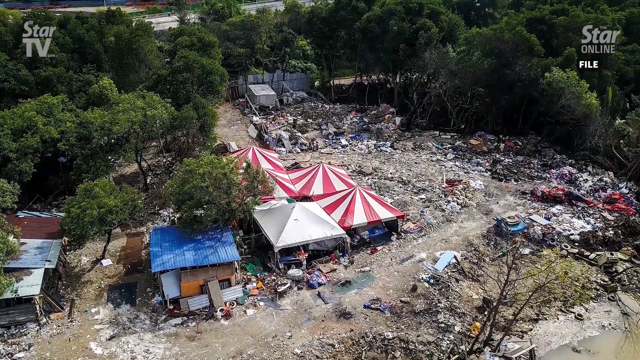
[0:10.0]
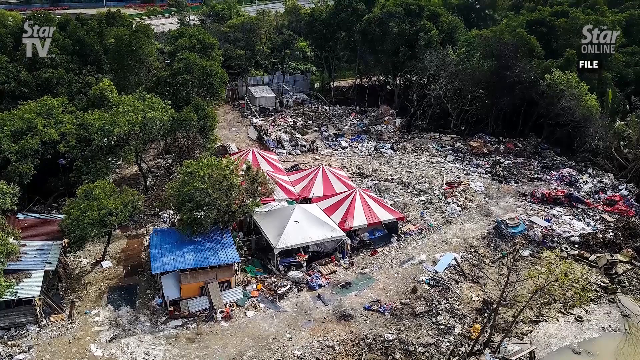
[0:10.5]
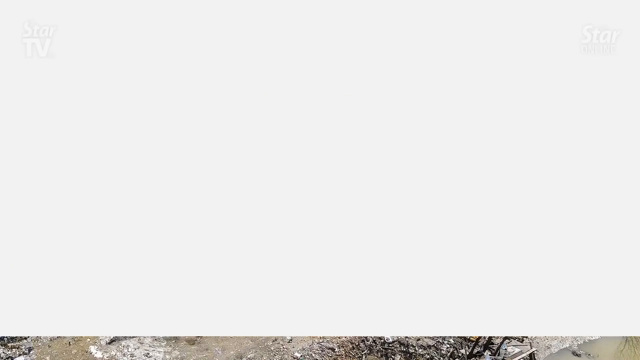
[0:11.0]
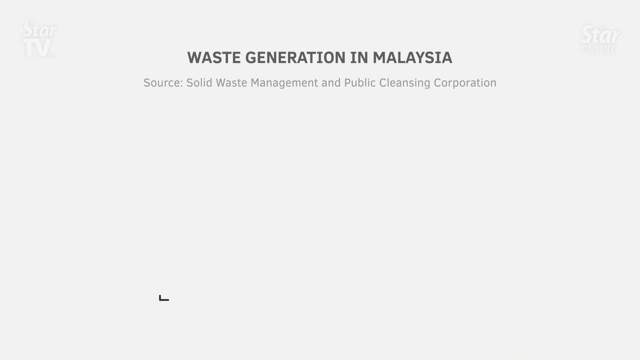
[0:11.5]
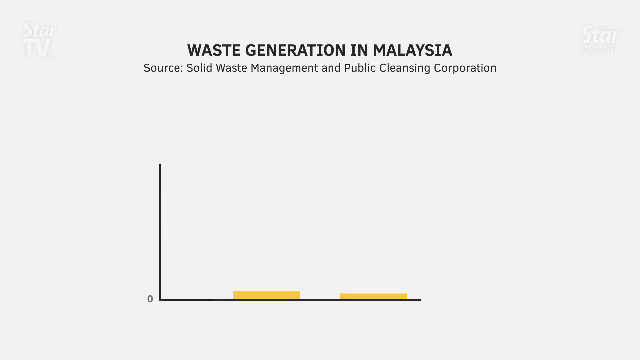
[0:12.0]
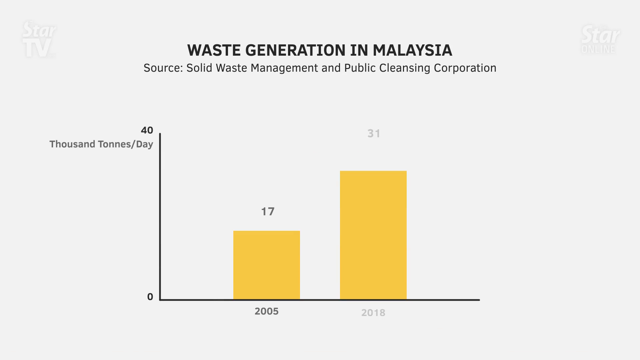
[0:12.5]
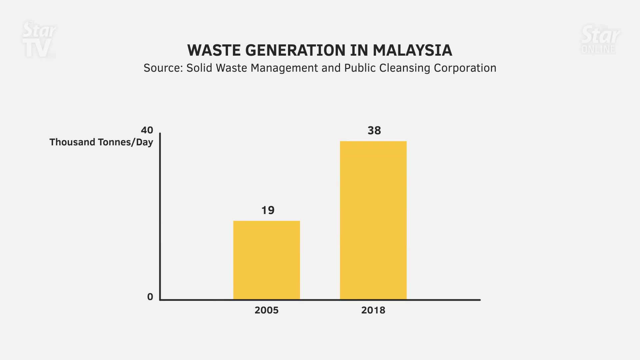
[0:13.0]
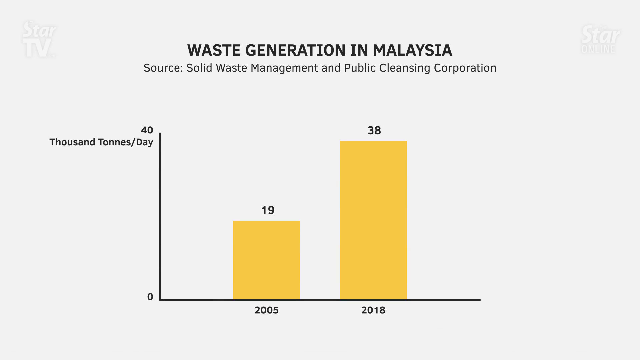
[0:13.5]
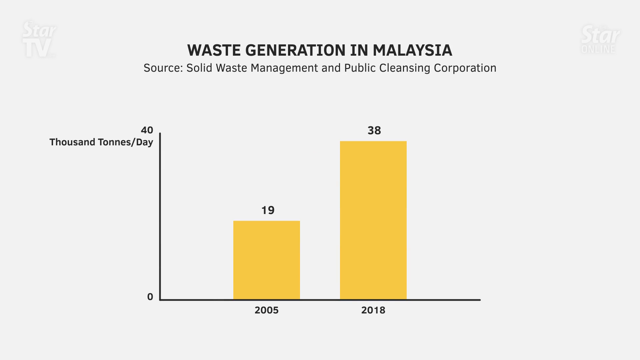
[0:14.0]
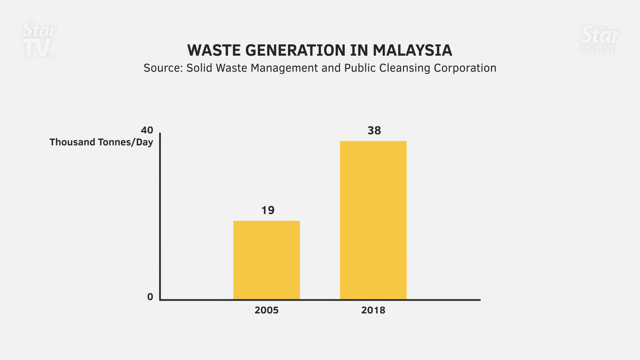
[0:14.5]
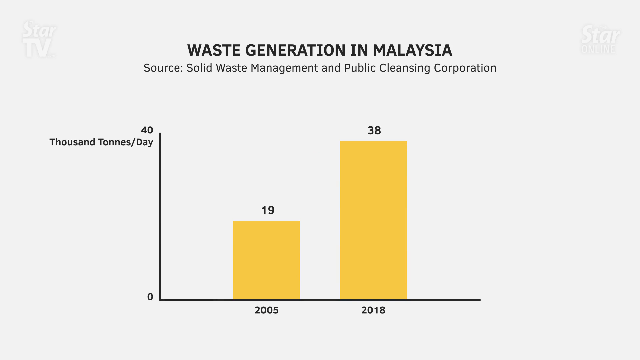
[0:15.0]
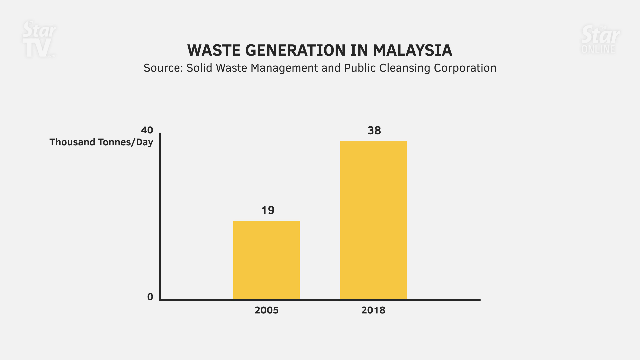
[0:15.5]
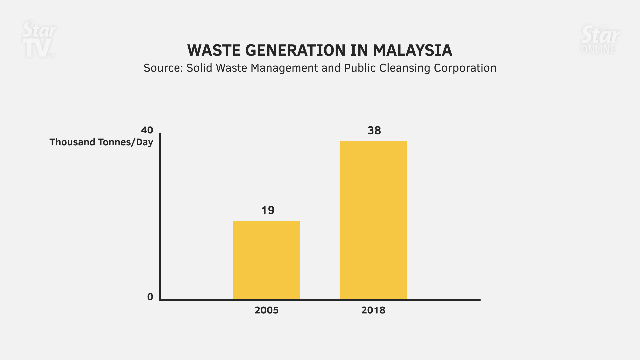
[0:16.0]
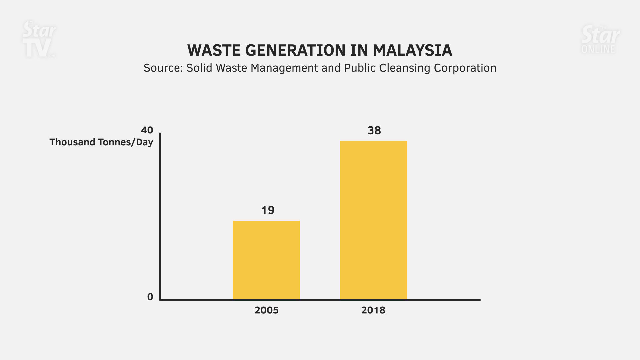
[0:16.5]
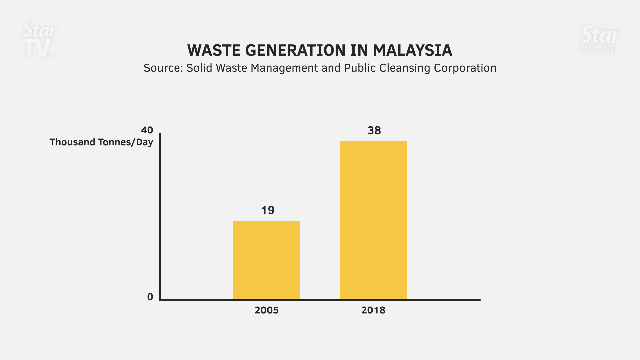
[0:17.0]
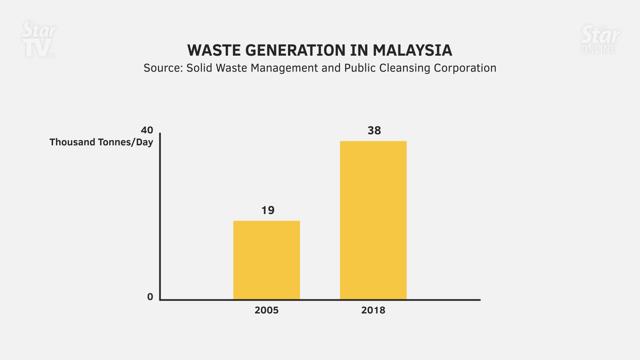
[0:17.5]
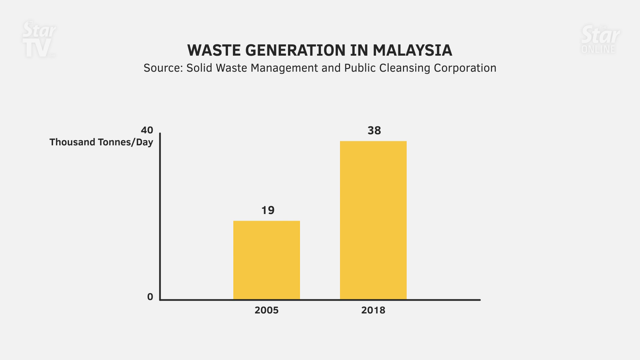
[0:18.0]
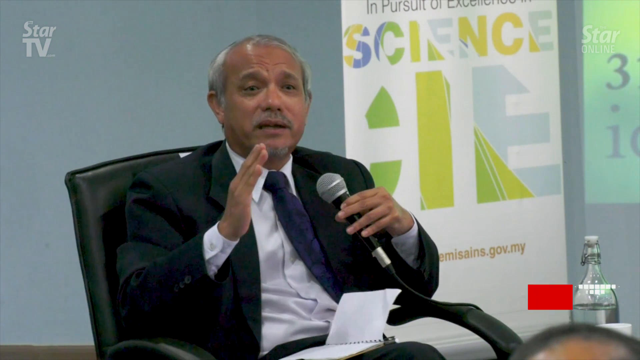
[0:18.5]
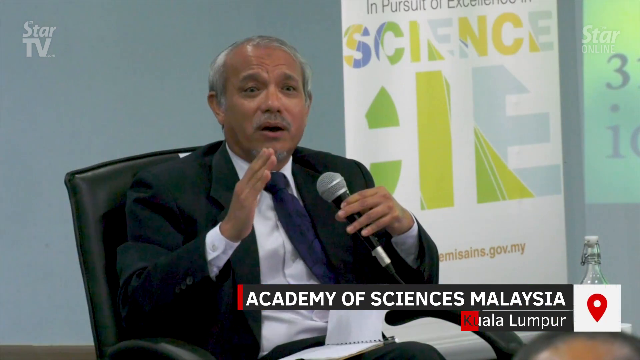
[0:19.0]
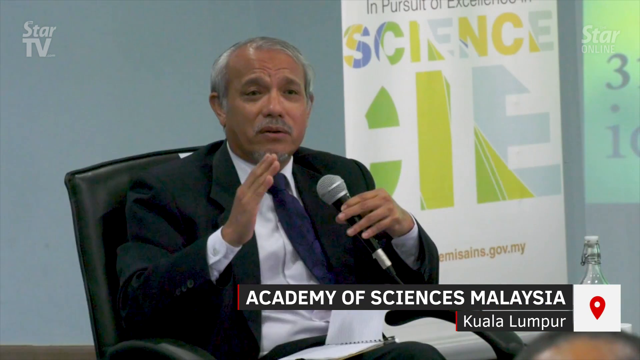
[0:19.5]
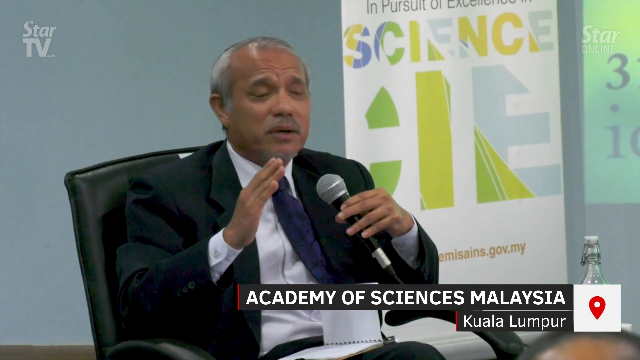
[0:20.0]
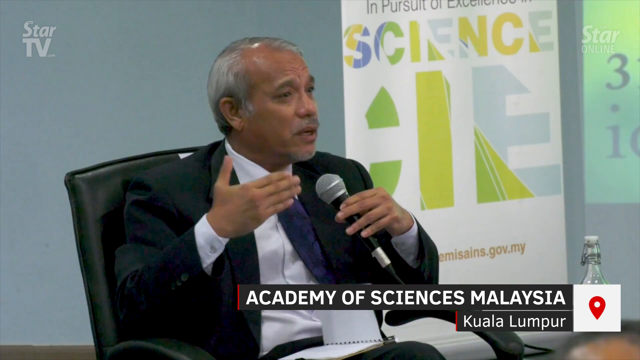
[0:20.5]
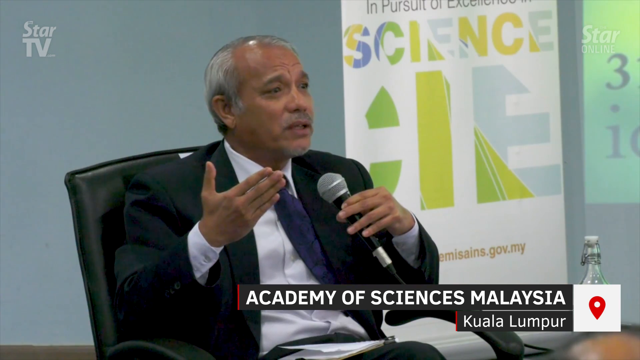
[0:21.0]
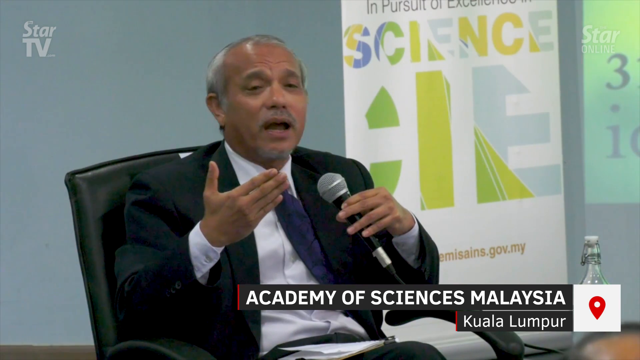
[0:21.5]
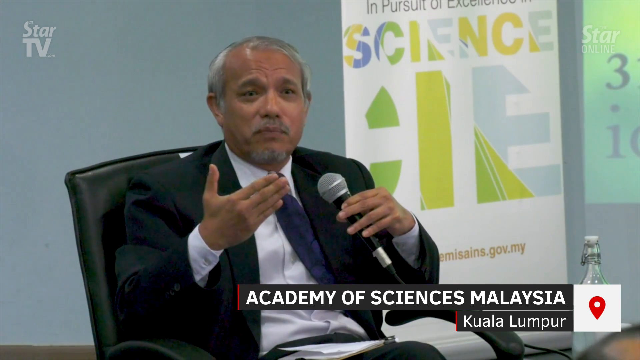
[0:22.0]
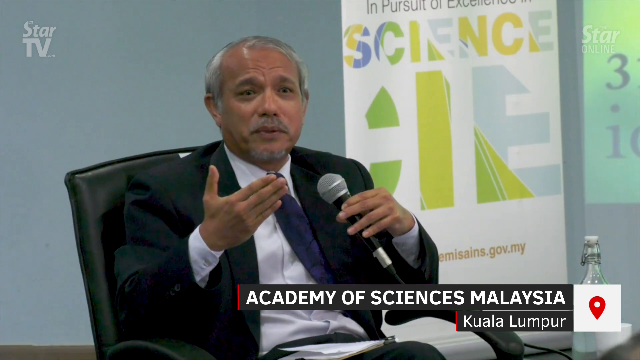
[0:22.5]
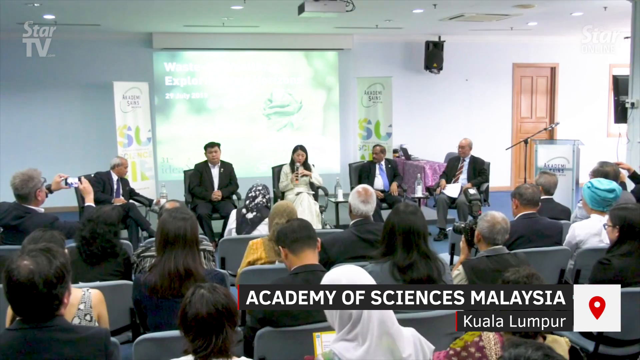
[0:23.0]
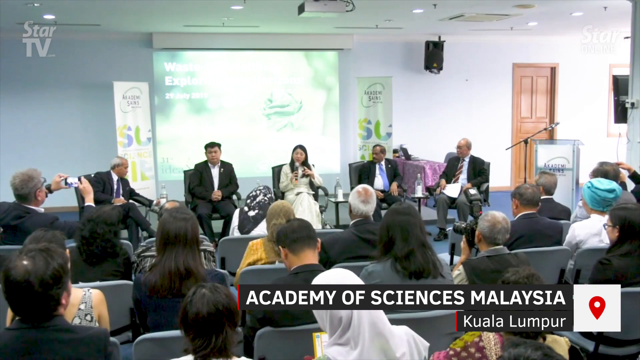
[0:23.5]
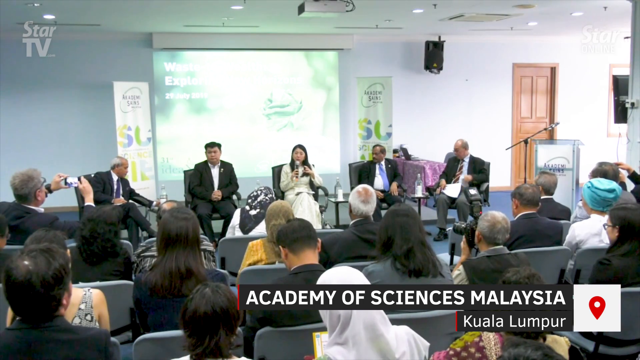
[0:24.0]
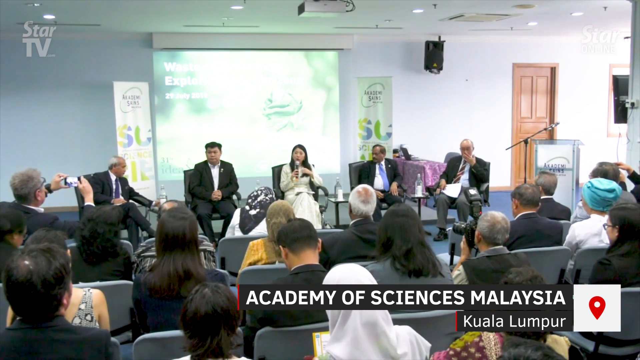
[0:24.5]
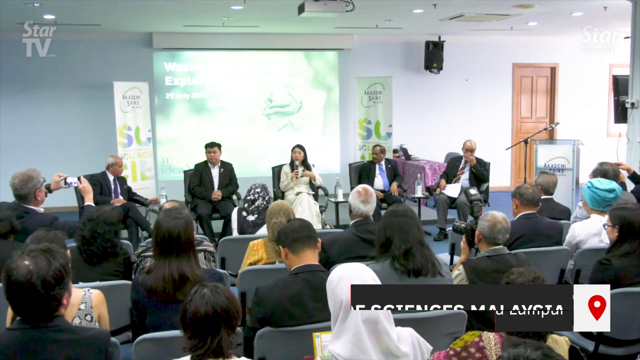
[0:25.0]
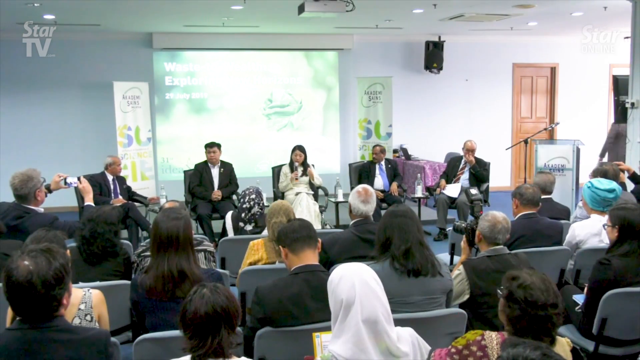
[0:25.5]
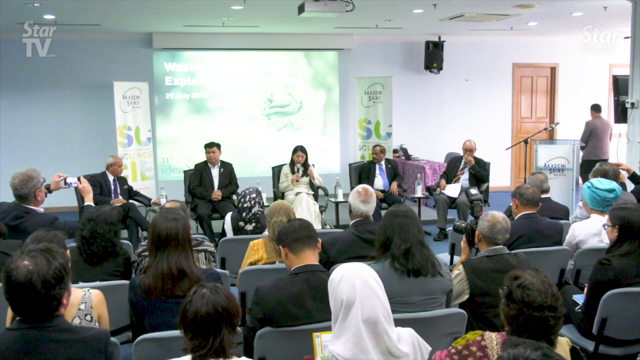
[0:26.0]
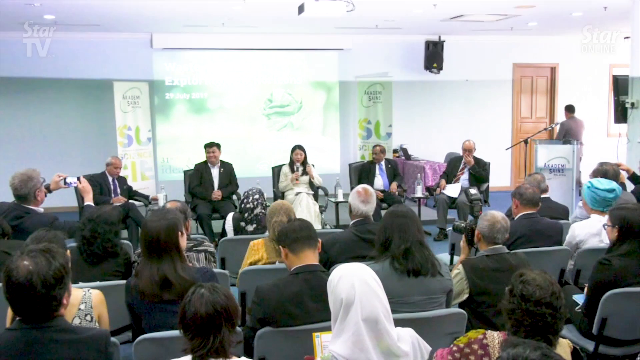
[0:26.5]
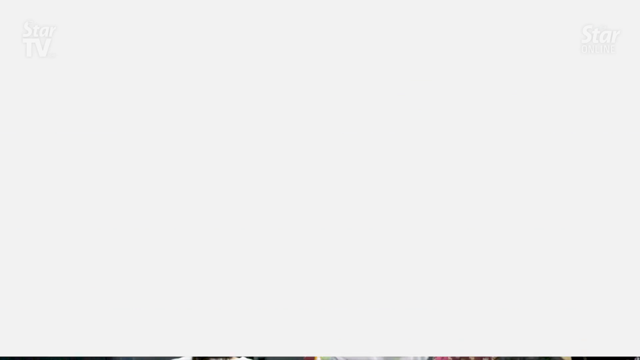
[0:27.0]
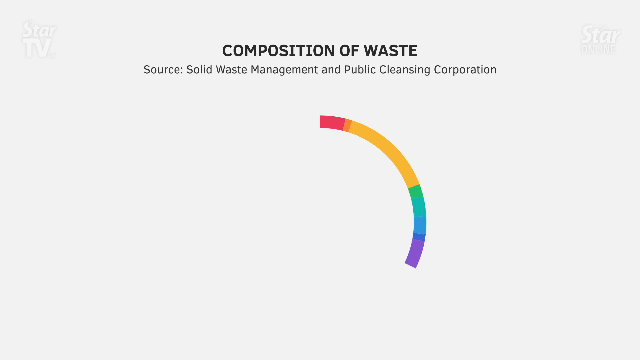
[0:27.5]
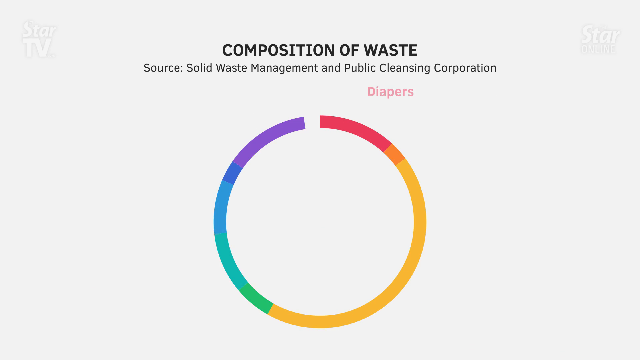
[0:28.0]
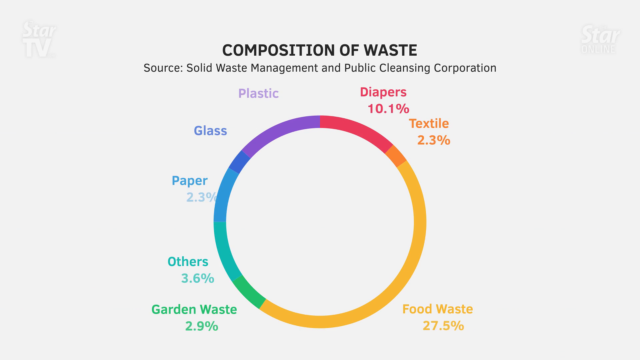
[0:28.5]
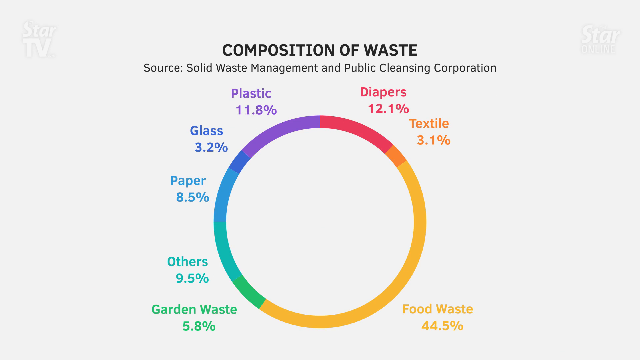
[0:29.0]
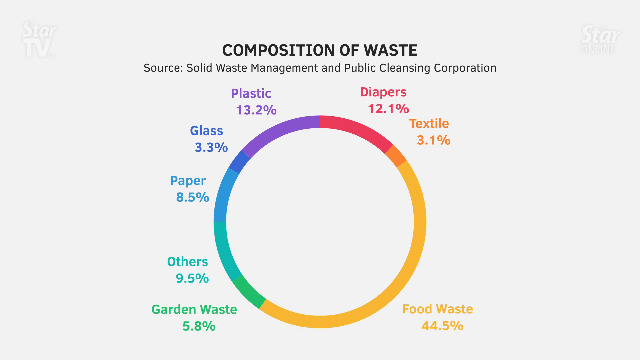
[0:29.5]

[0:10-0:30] A bar graph titled "Waste Generation in Malaysia" appears on screen, giving its source as the "Solid Waste Management and Public Cleansing Corporation." It shows 19,000 tons per day generated in 2005 and 38,000 tons per day generated in 2018. The video then cuts to footage of some sort of meeting with the Academy of Sciences in Malaysia, in Kuala Lumpur, where people sit in a conference room. Five people, four men and one woman, are up on the podium speaking to an audience of men and women, presumably about waste generation. A circular graph then appears showing the composition of waste: food waste is the largest share, plastic waste is next, and textiles, diapers, glass, paper and other categories are also included.